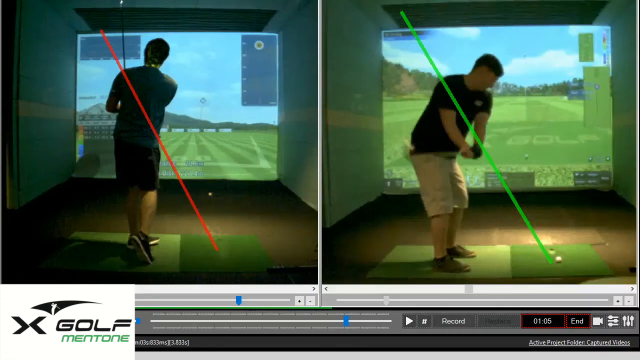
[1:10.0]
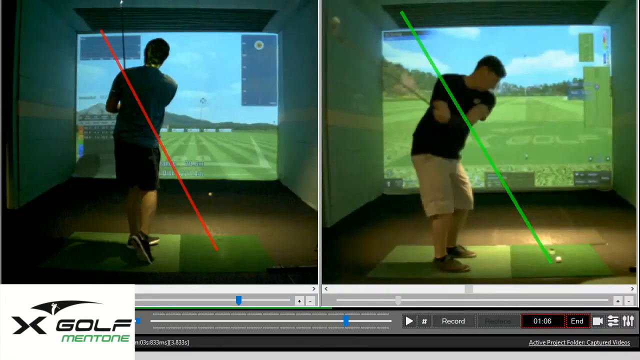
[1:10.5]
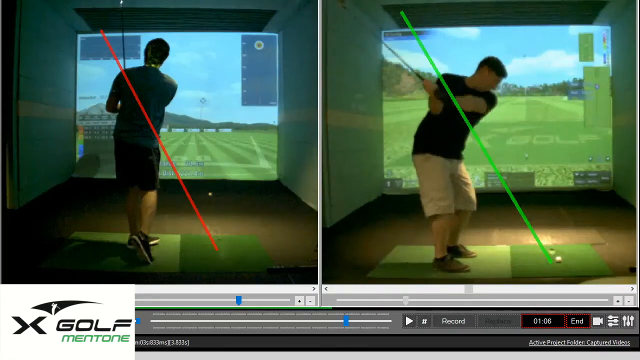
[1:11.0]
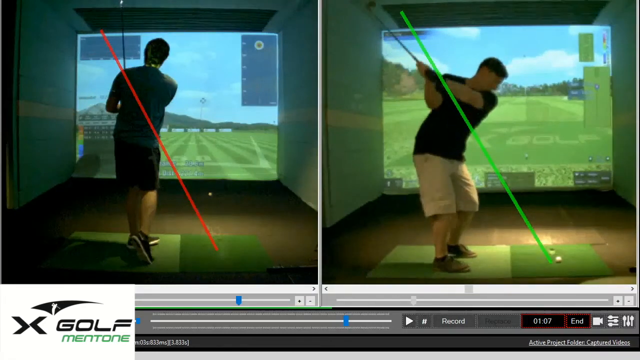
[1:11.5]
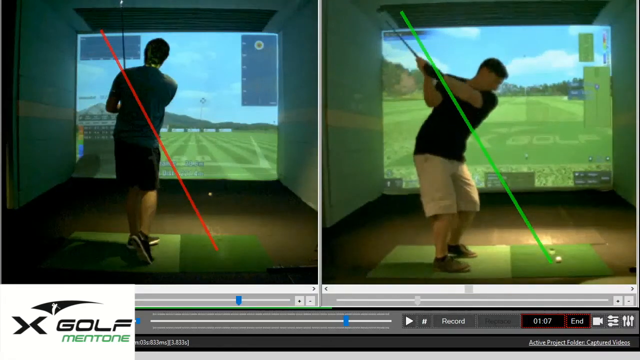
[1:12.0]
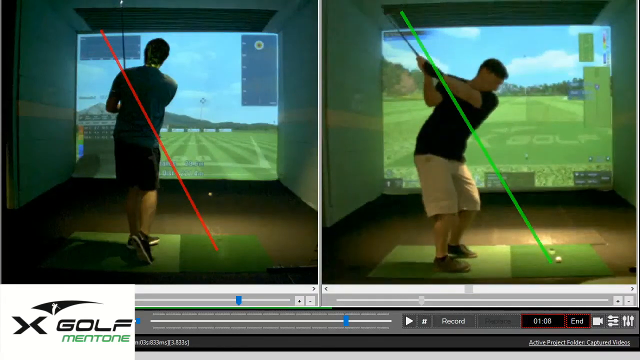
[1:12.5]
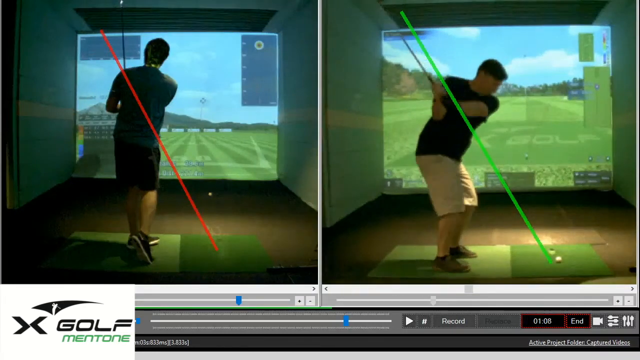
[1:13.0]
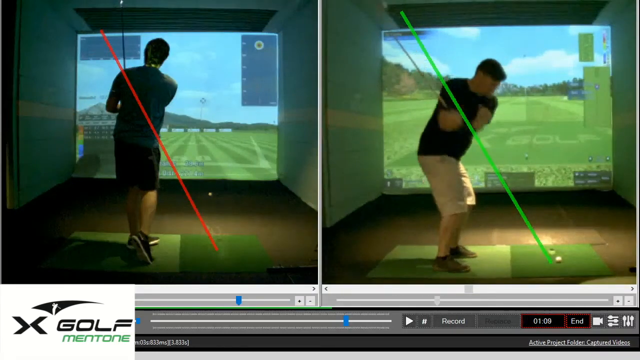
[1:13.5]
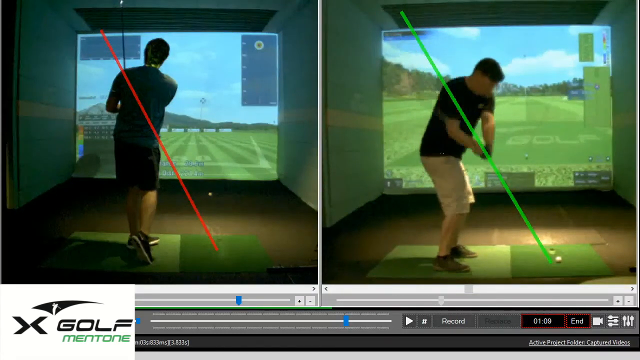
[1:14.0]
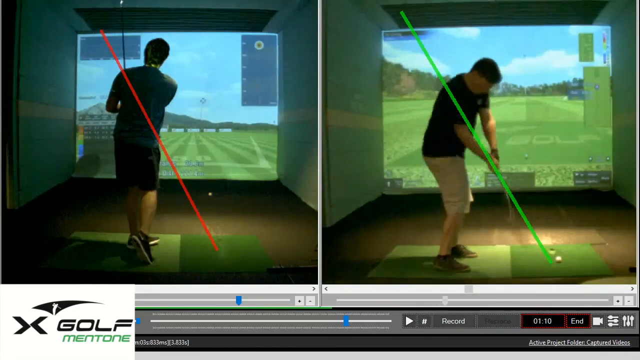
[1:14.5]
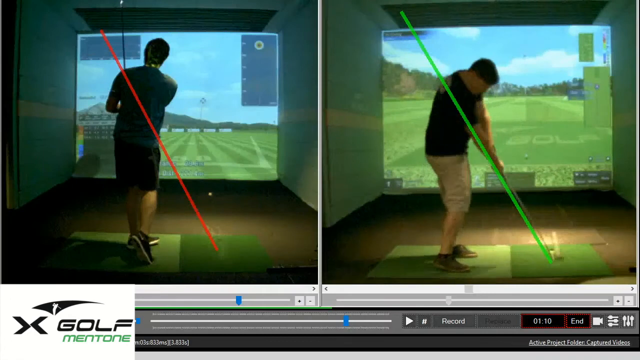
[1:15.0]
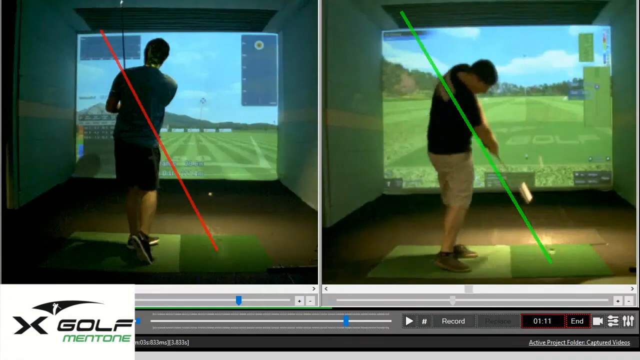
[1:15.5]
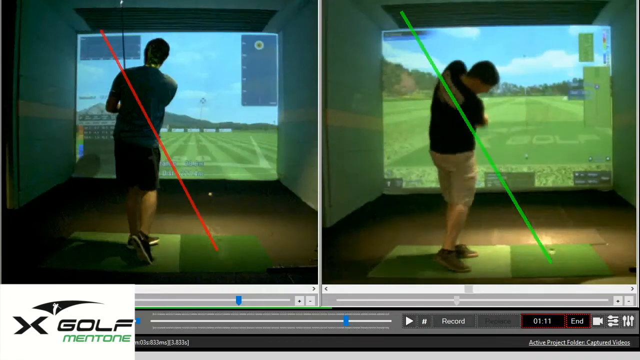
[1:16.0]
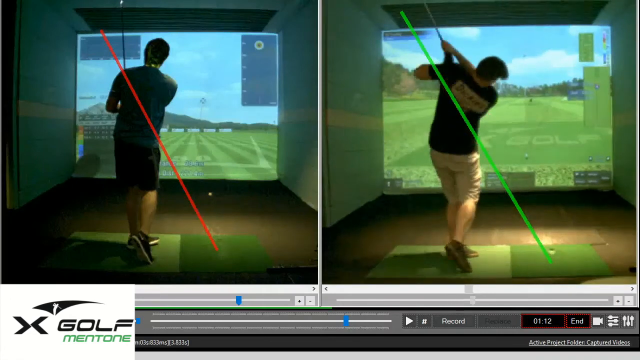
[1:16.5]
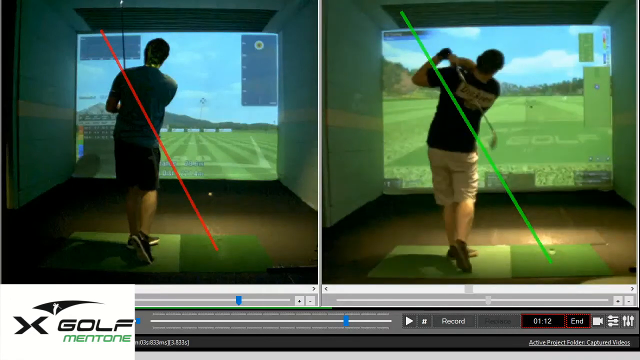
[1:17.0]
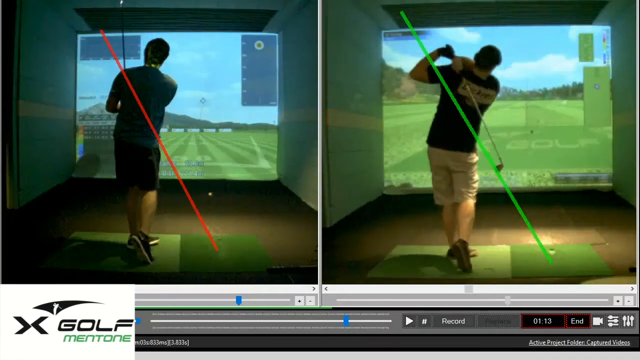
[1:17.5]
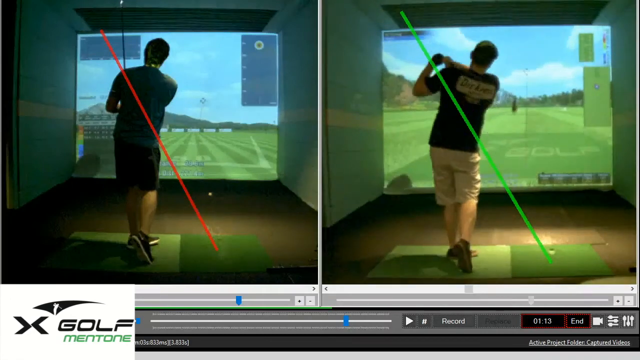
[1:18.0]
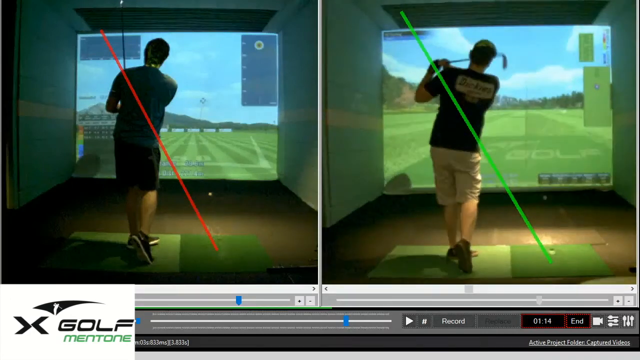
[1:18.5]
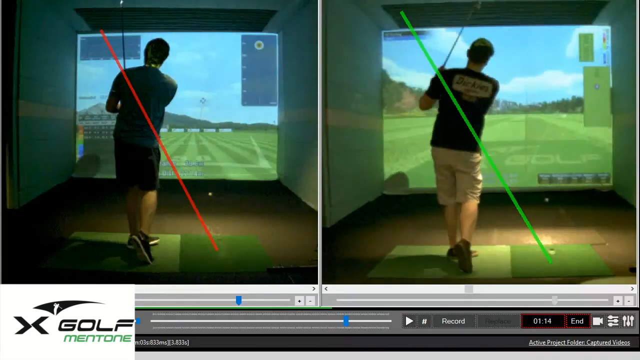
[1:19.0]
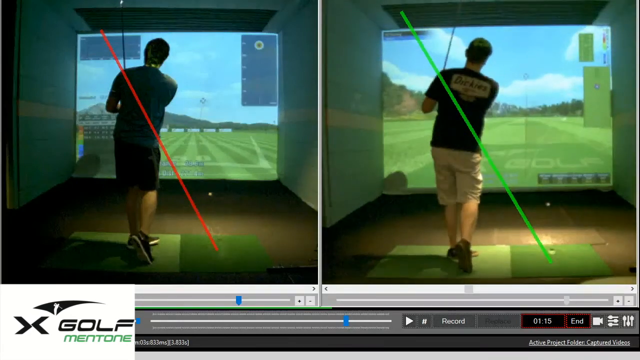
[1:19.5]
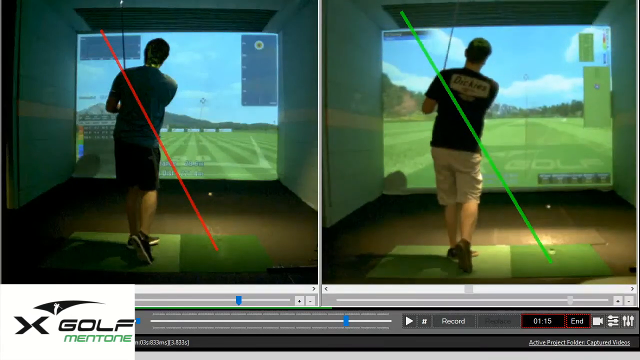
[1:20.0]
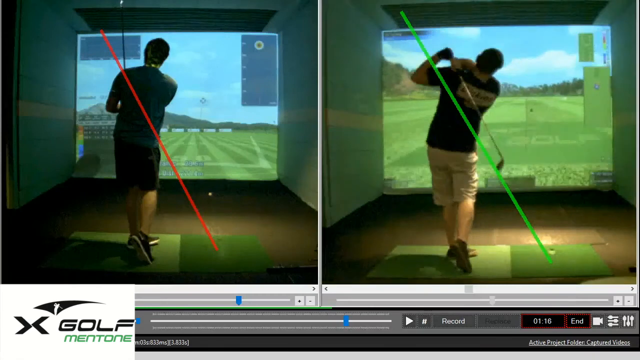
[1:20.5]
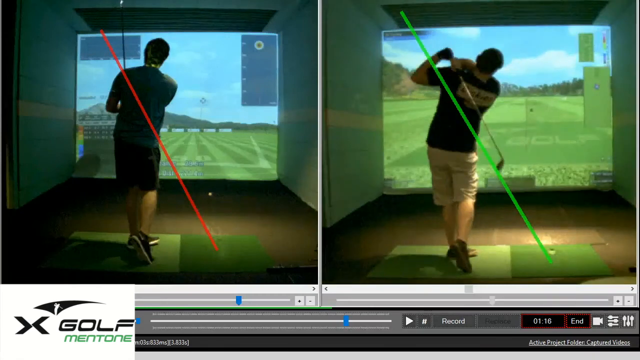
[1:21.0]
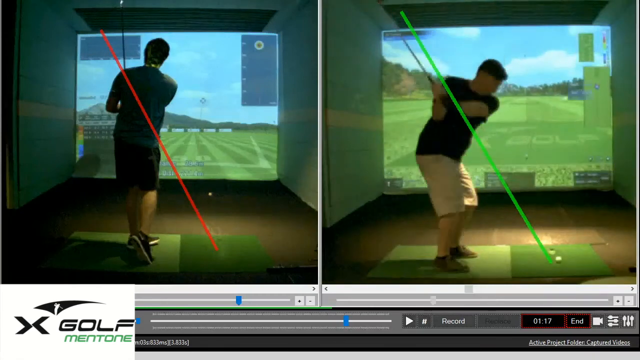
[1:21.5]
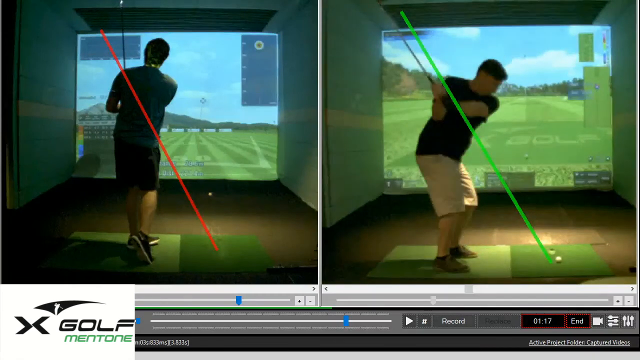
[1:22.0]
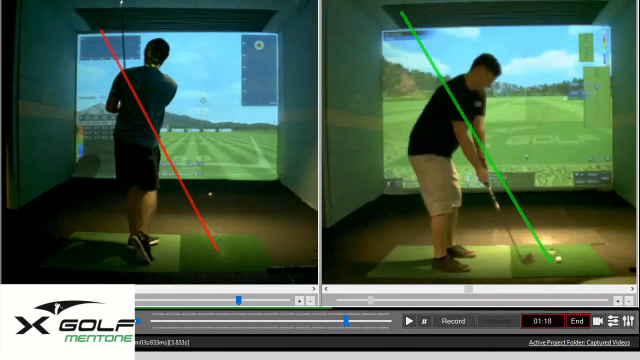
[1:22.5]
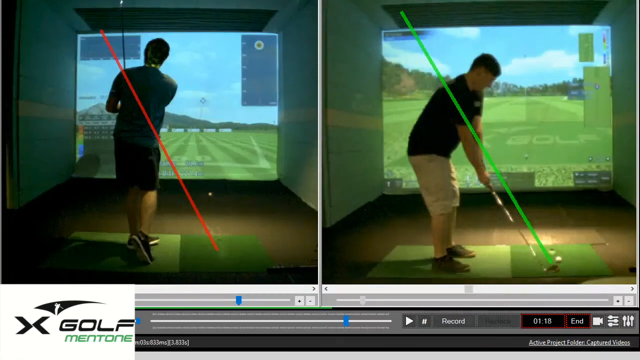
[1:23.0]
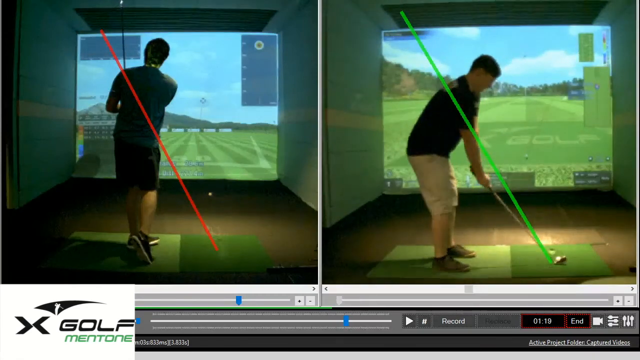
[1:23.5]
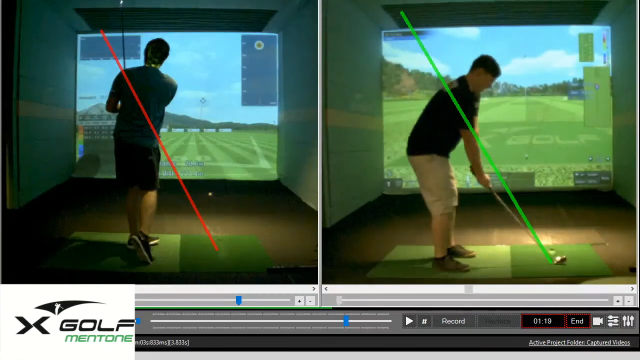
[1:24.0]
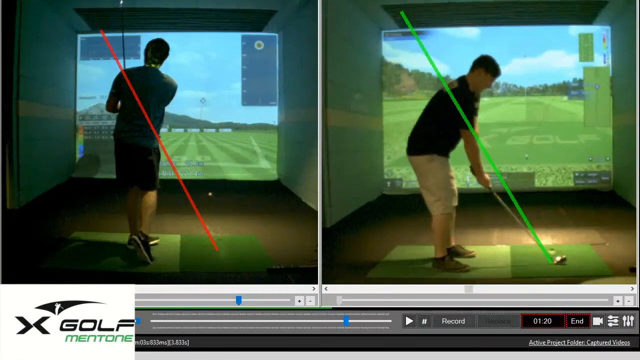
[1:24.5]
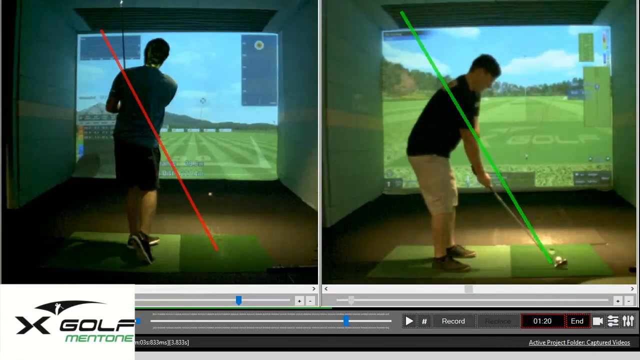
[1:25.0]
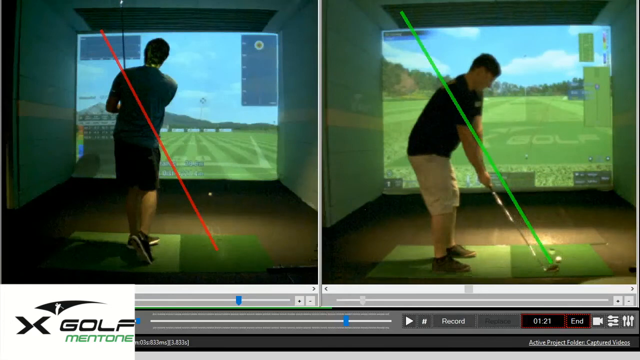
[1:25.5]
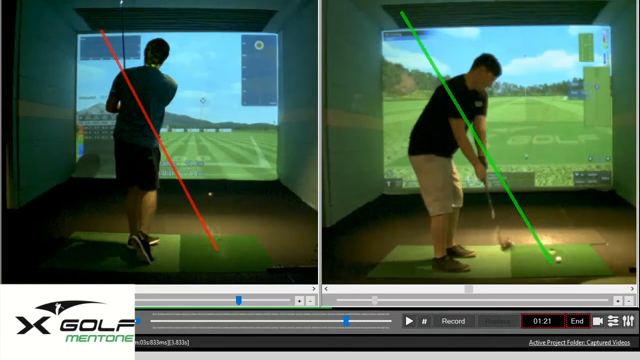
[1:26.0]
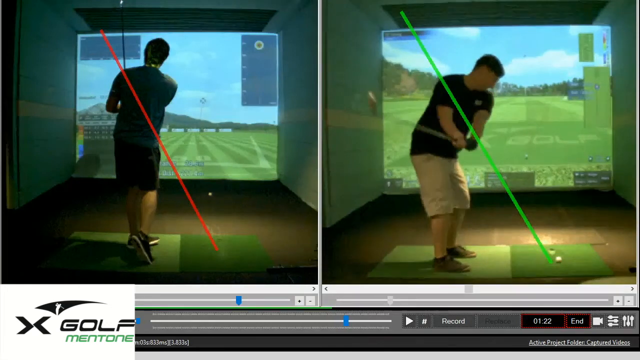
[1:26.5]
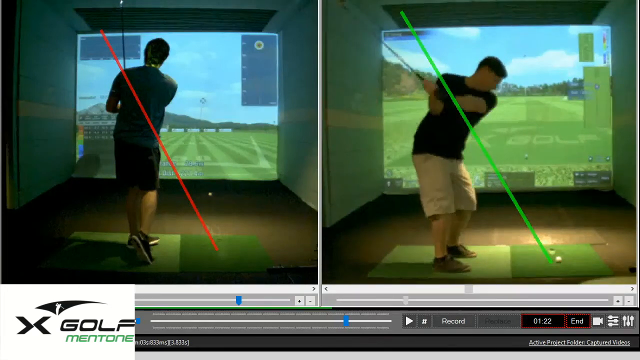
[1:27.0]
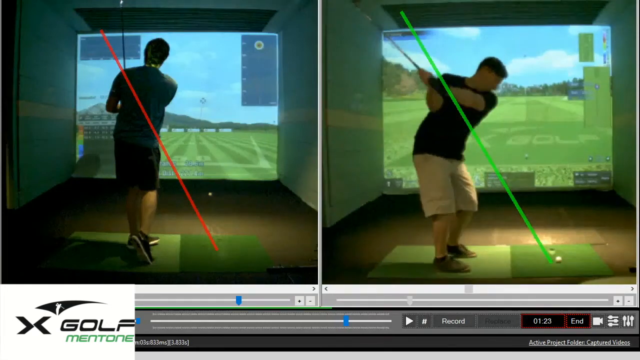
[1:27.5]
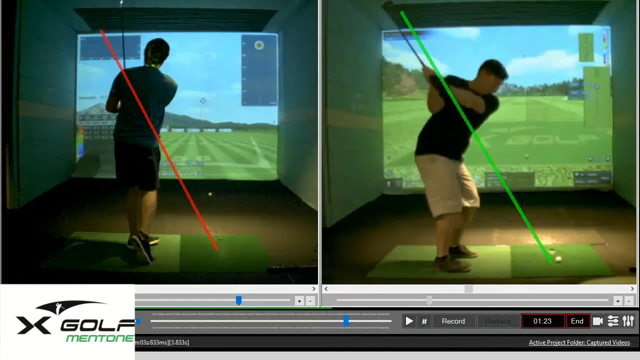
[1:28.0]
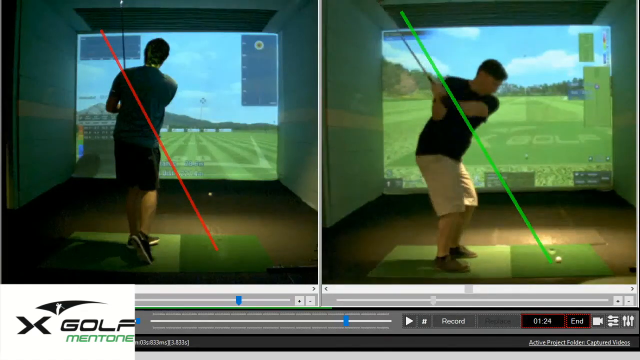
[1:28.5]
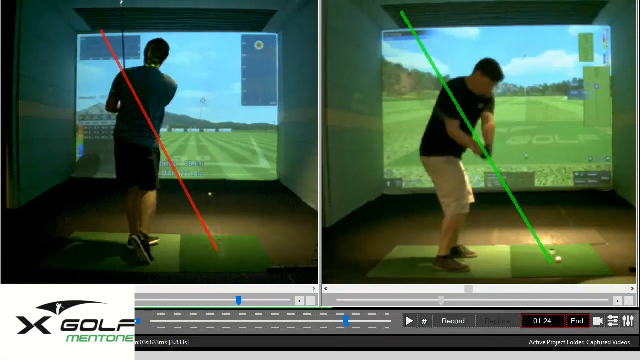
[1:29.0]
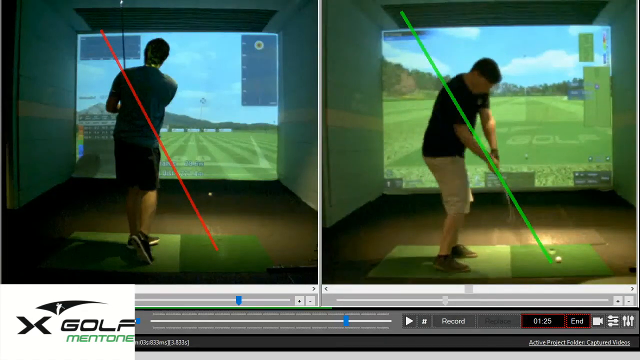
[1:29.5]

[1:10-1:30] The split-screen effect continues in the ad for X-Golf Mentone. The golfer on the left, in a green shirt and black shorts, has a red line going through his graphic, indicating incorrect or improper form. The golfer on the right, in a black shirt and tan khaki shorts, has a green line going through his graphic, indicating correct form. In the lower left-hand corner is the X-Golf Mentone logo, a white golfer inside a black shape, colored black, white and green. Along the bottom are controls for the app or game: a record button, a time counter and an end button.